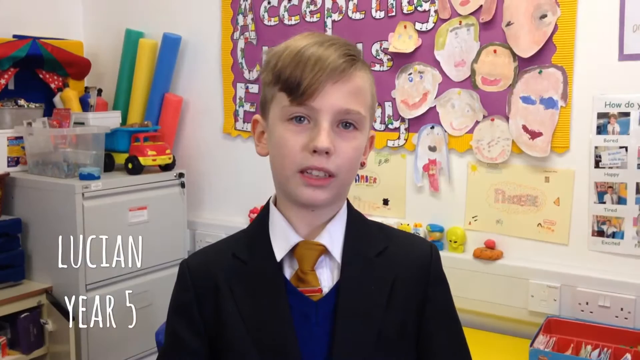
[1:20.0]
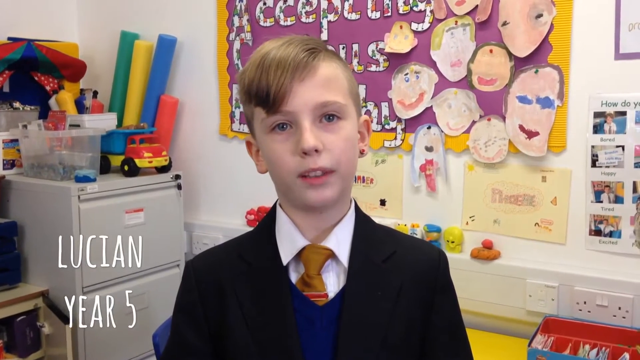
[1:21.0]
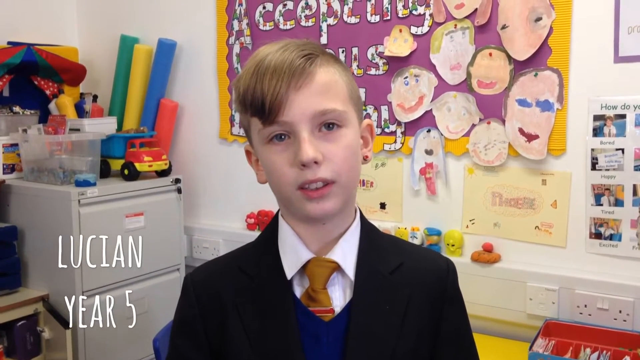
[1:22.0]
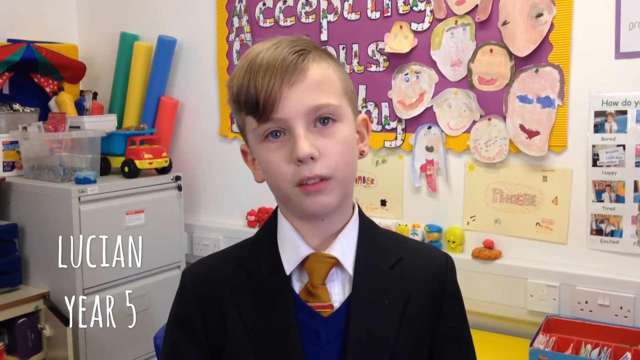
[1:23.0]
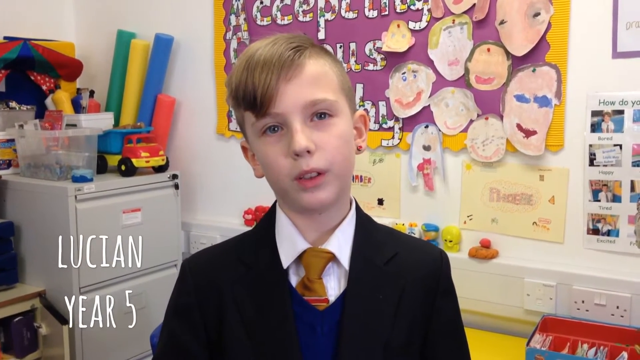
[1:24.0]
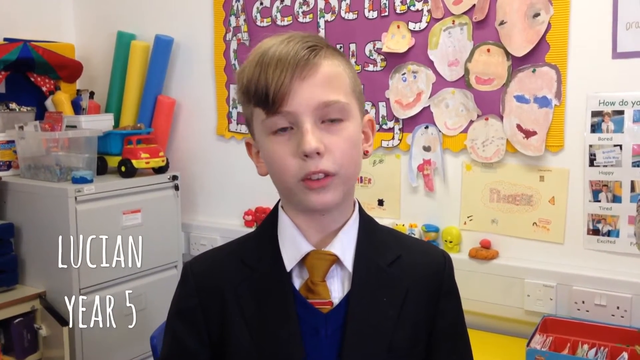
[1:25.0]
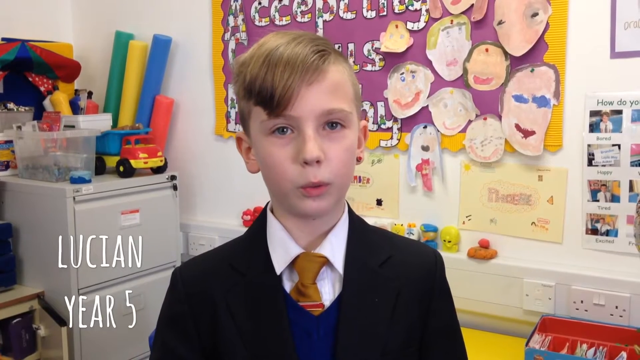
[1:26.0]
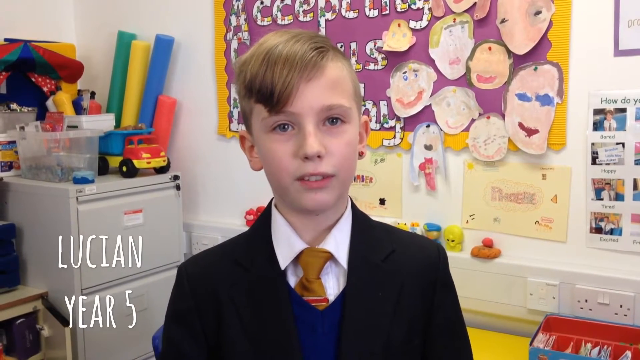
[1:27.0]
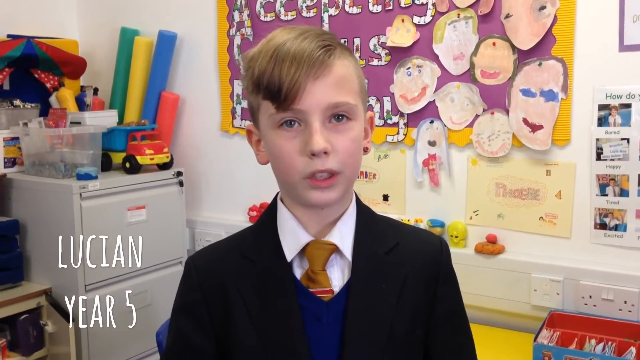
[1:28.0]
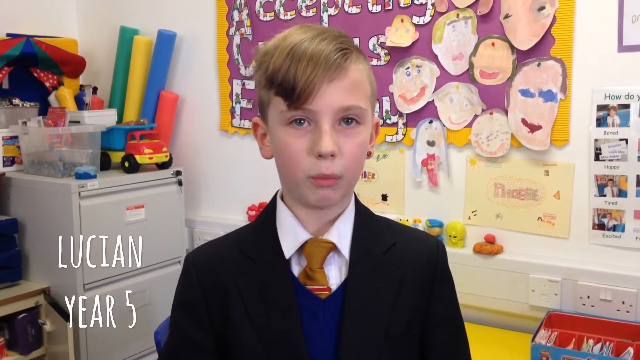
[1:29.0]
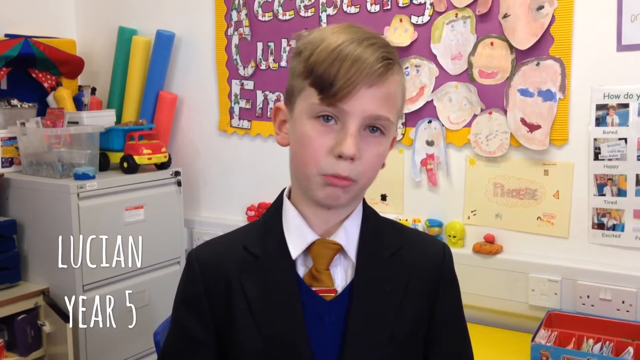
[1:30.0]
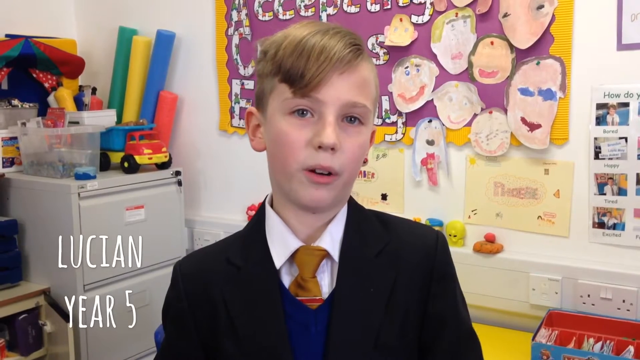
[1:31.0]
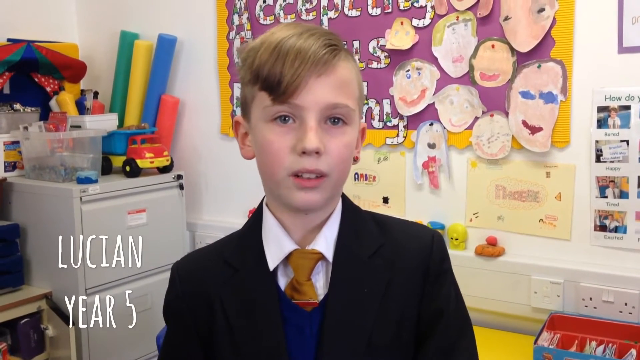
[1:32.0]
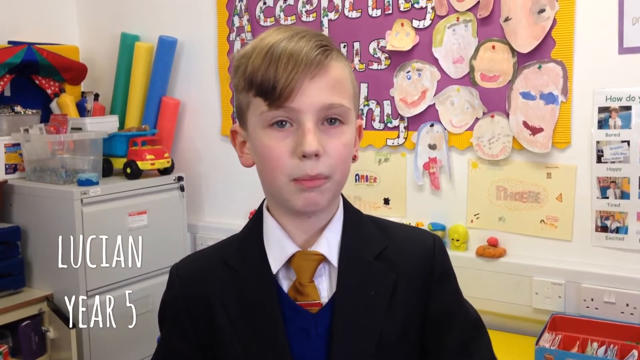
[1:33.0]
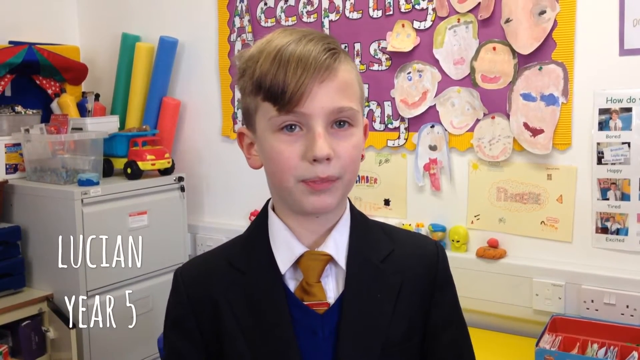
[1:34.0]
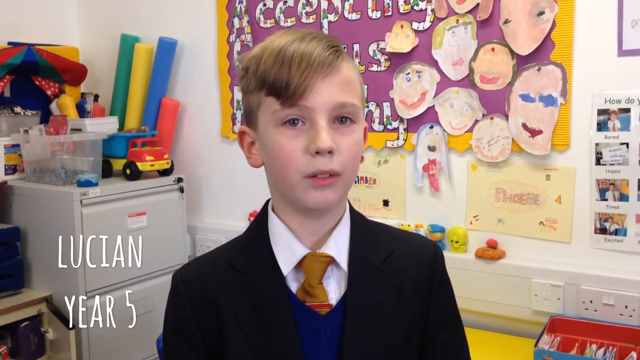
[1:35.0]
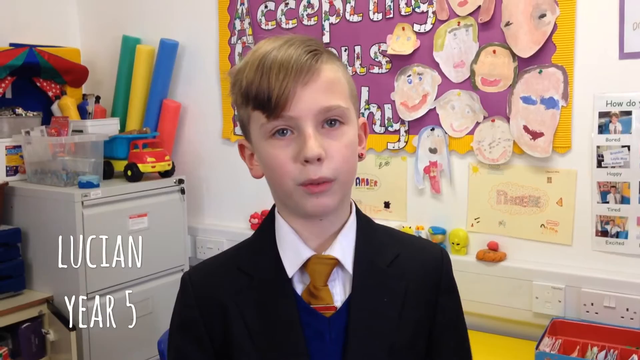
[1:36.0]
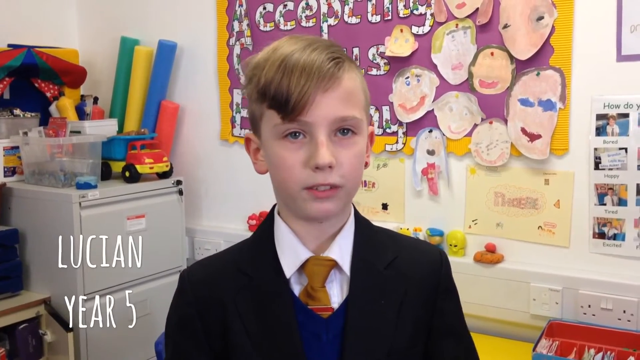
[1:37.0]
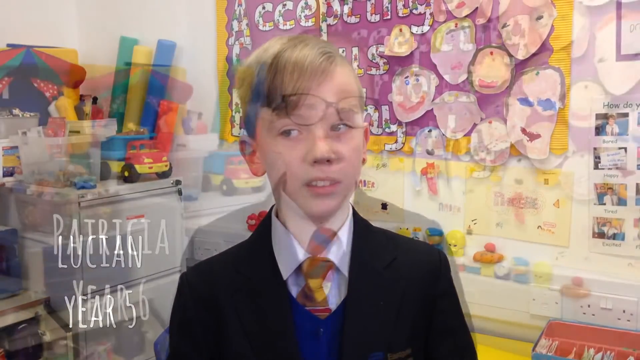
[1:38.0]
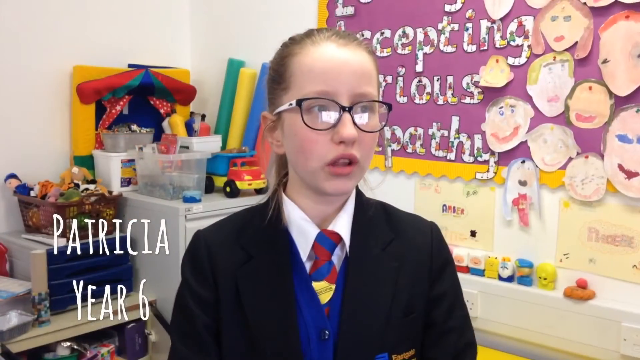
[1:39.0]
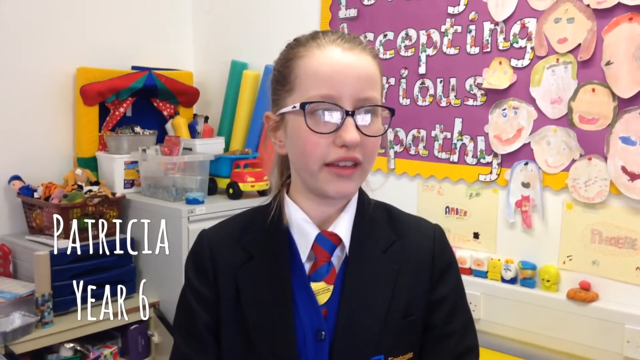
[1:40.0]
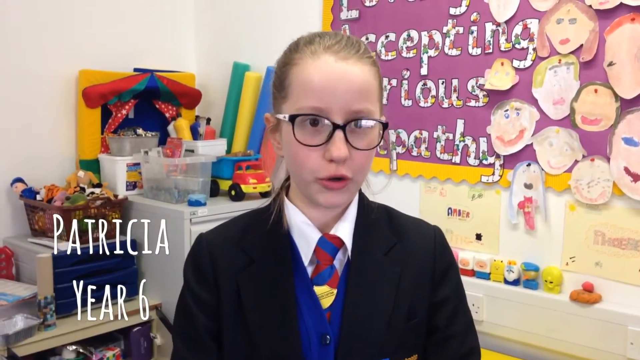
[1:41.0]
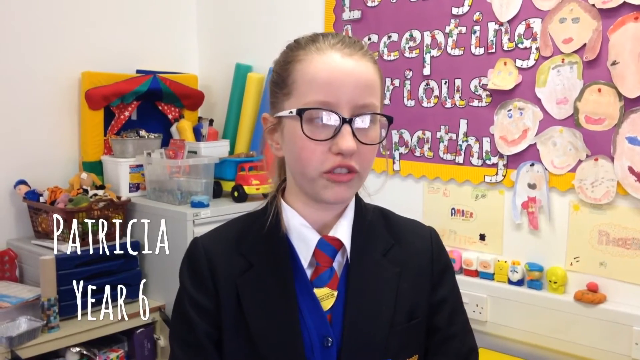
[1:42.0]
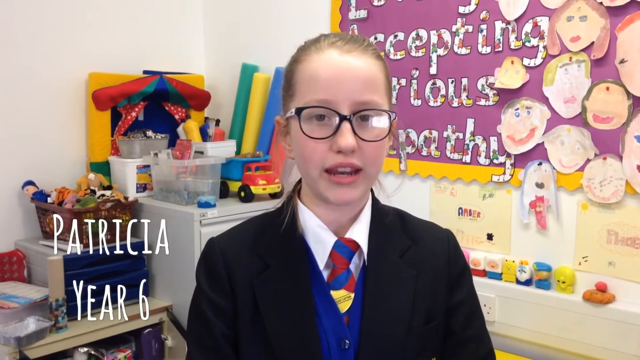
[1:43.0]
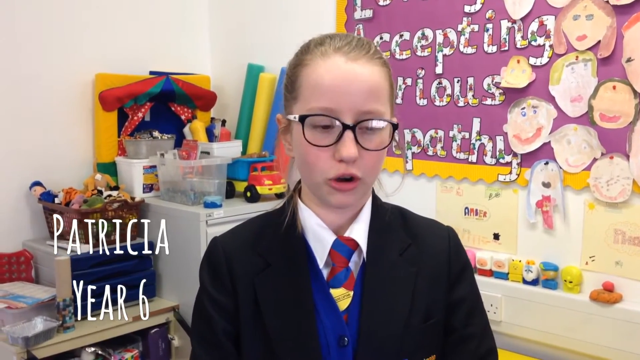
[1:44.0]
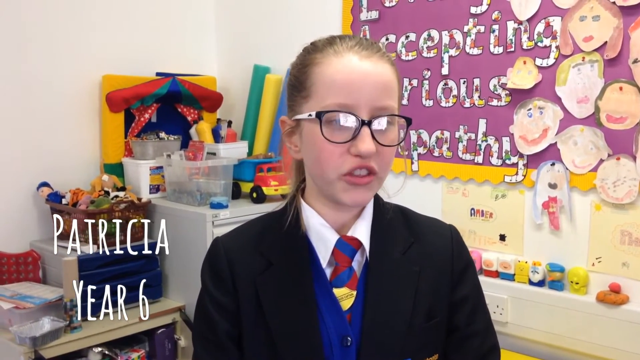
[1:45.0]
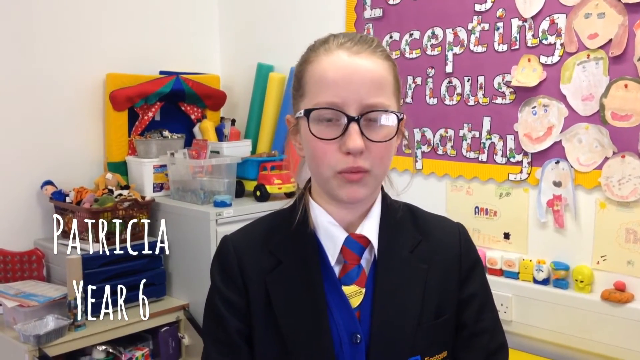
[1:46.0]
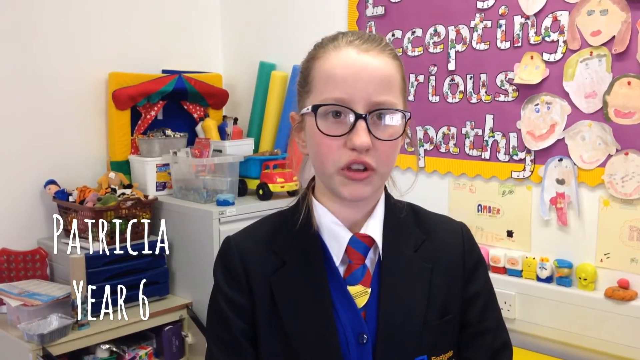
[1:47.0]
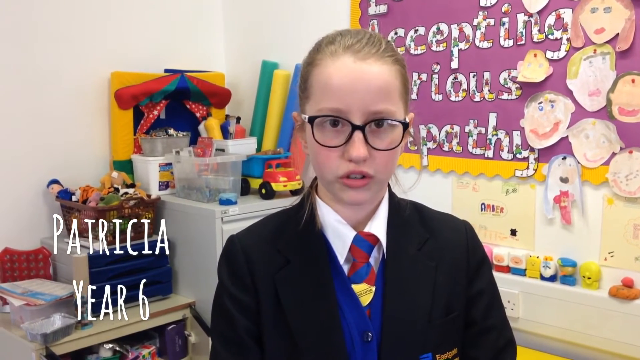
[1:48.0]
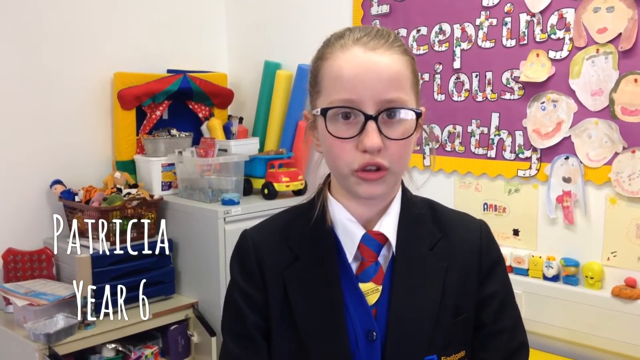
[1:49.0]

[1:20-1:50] The room is the same one the principal was in, as the little cut-out faces drawn and put on the board are visible to the right of the boy's head. Letters across the top of the back wall read "Acceptability", with the next two behind his head. There are some long, skinny pool floaties and a filing cabinet with toys on top. Next, a little boy with blonde hair combed over to the left, shaved close on the sides and about three inches on top, wears a white shirt, a gold tie, a blue sweater and a black coat; text in the bottom left corner gives his name as Lucien, year five. He looks straight ahead talking, tilts his head a little to the left, then looks forward. He has an earring in his right ear. He tilts his head to the right as he talks, his shoulders move a little, and he swallows really hard, looking really nervous. His eyes dart off to the left and come back, and he talks kind of nervously. The video cuts to a girl named Patricia, year six, standing in the same place he was. Her hair is pulled back into a ponytail, and she wears black-rimmed glasses, a white button-up shirt, a yellow and blue tie, and a black blazer with a bit of a blue sweater visible underneath. She looks off to the right, with light reflecting off her glasses, then forward toward the camera, off to the right again, and back toward the camera, raising her eyebrows. Her mouth moves in a pretty exaggerated way when she talks, moving up a lot.